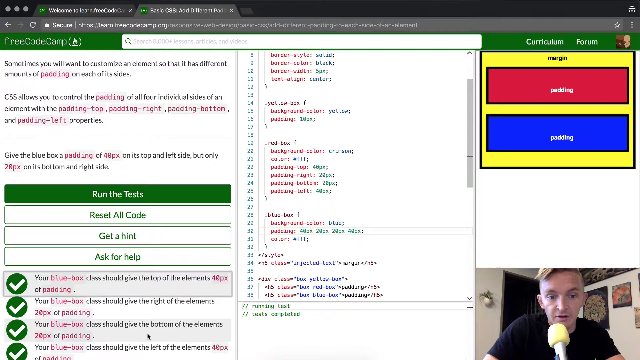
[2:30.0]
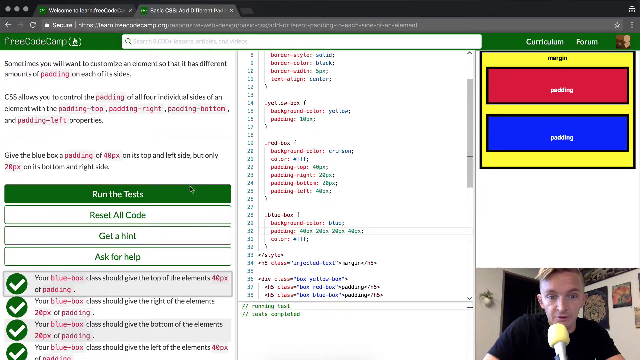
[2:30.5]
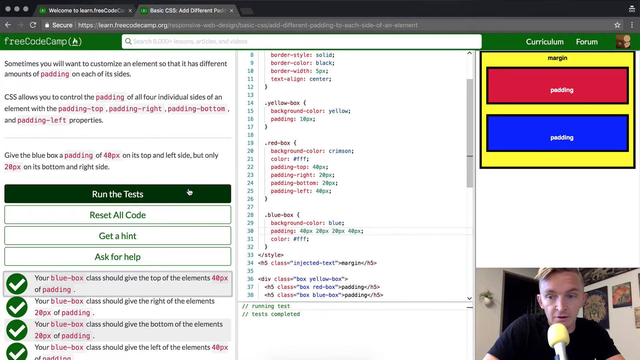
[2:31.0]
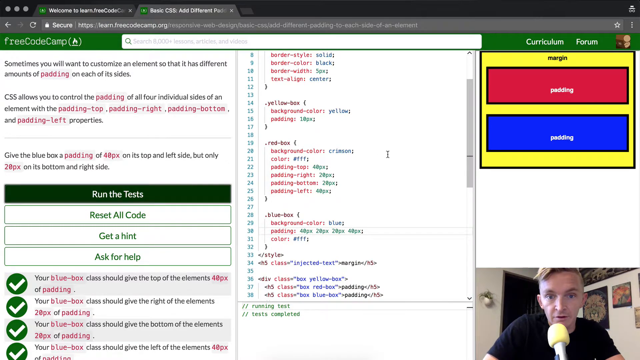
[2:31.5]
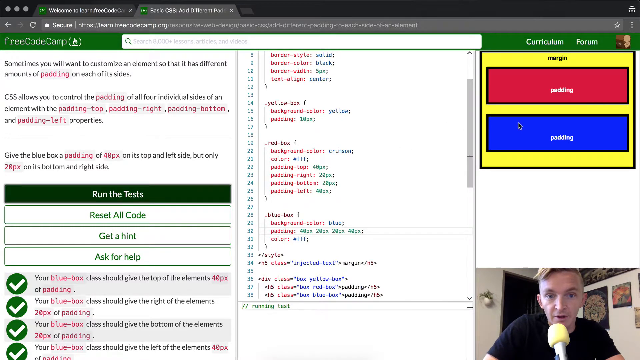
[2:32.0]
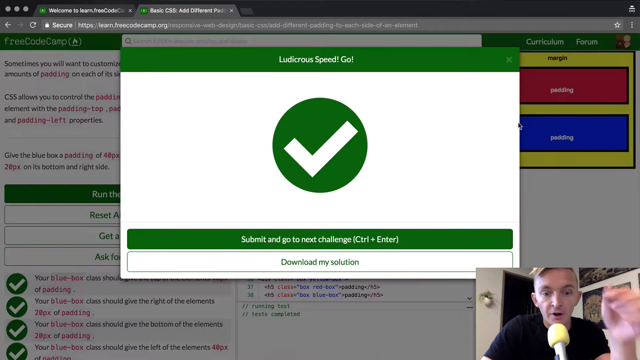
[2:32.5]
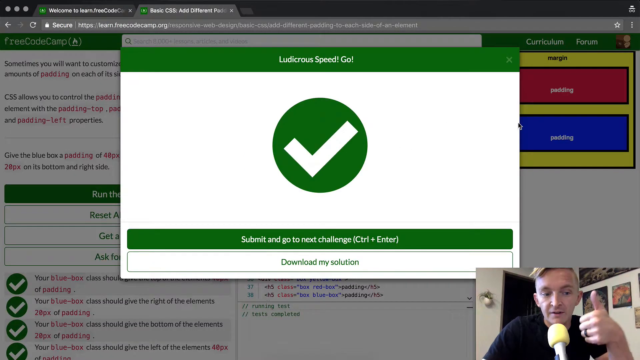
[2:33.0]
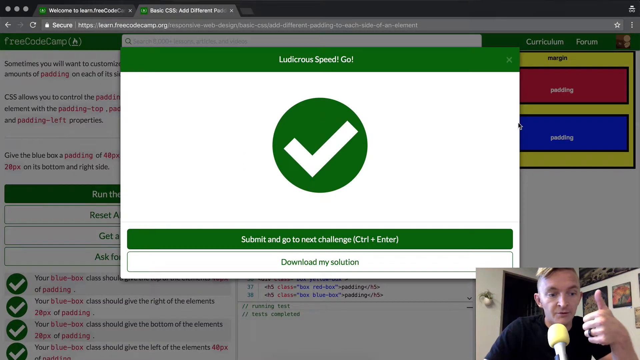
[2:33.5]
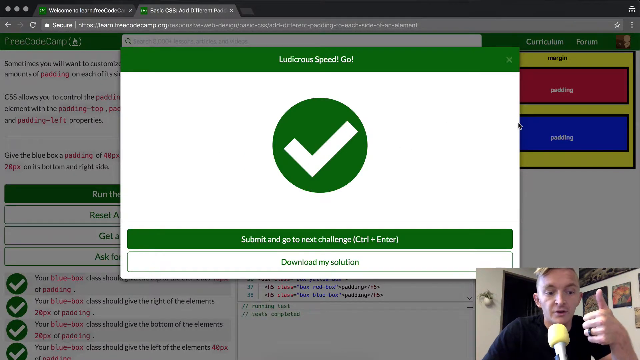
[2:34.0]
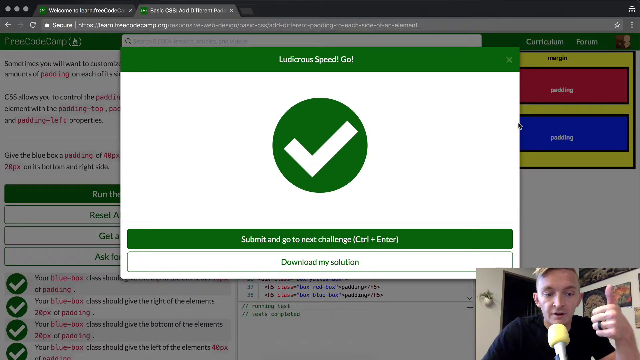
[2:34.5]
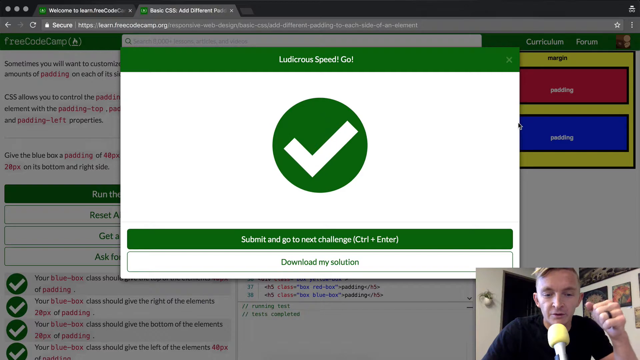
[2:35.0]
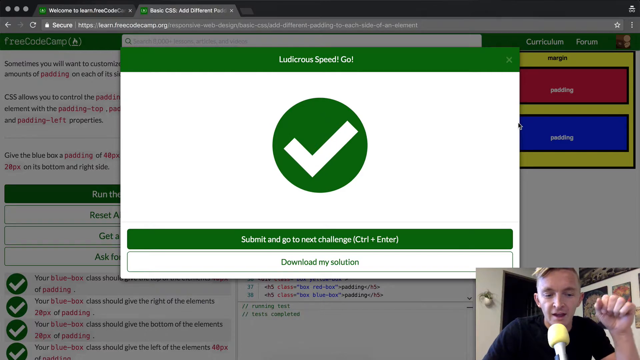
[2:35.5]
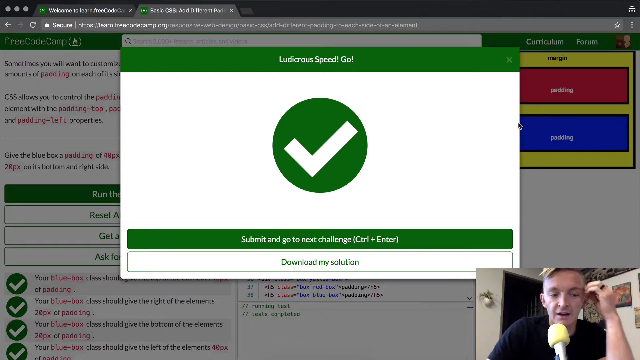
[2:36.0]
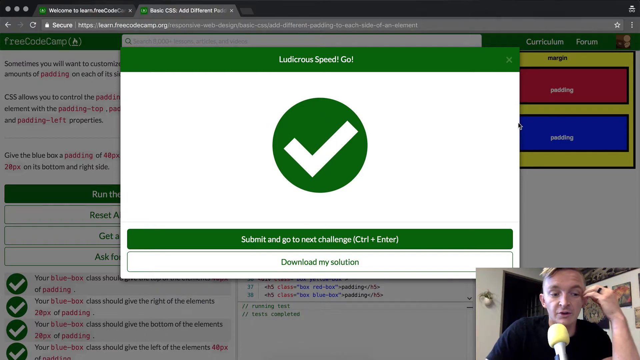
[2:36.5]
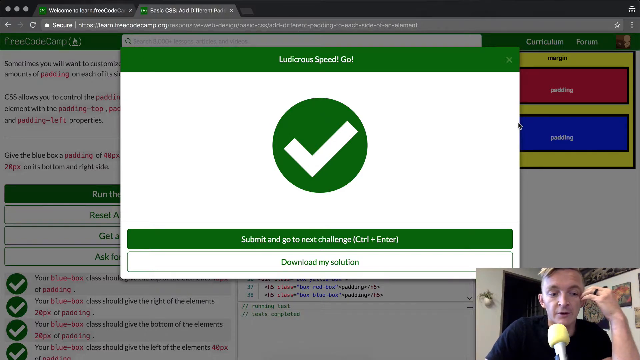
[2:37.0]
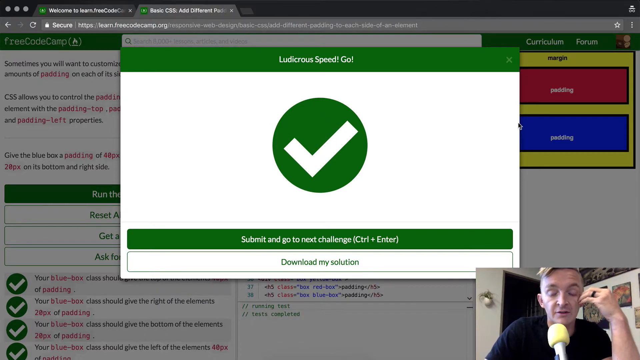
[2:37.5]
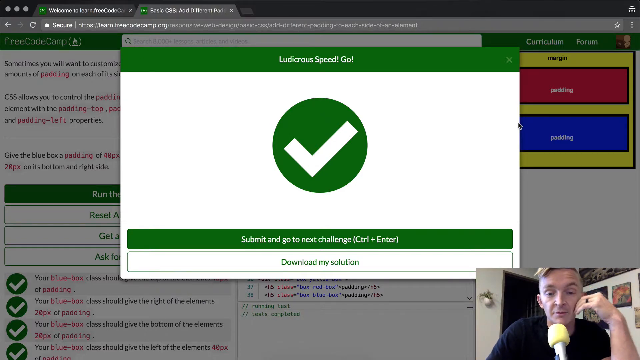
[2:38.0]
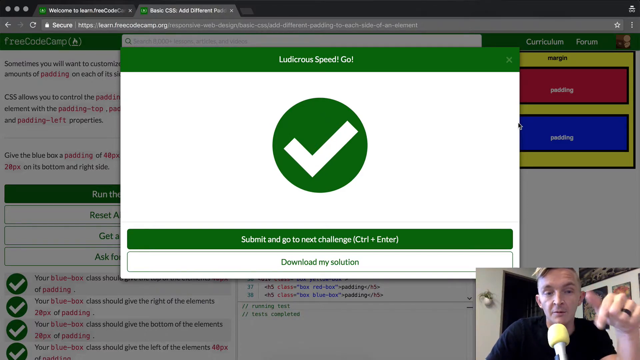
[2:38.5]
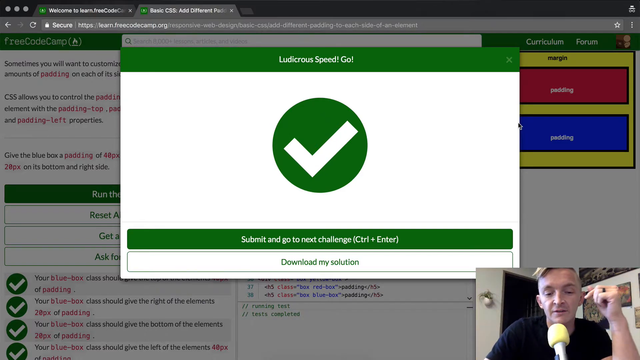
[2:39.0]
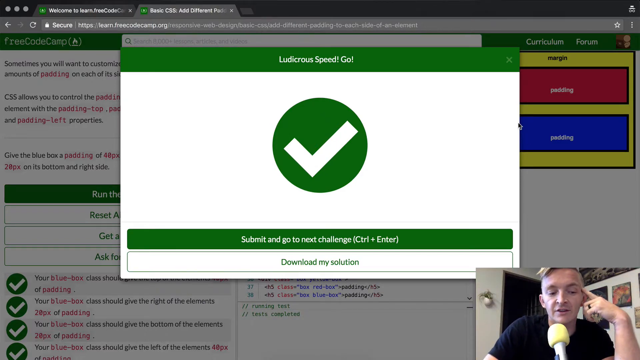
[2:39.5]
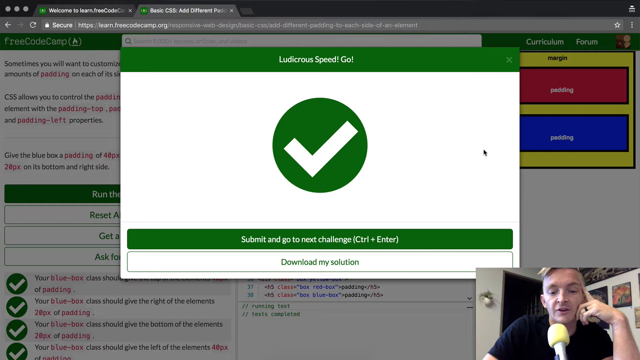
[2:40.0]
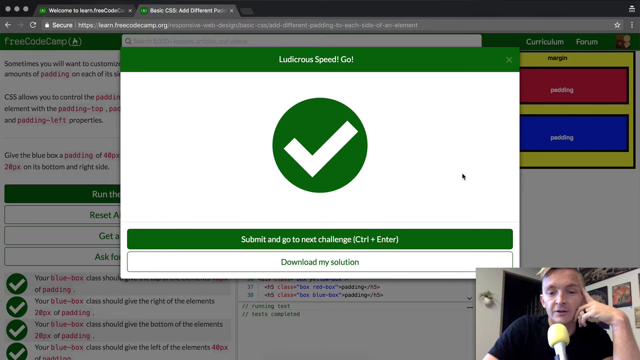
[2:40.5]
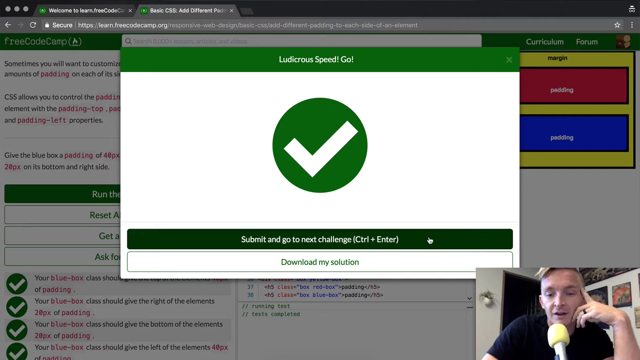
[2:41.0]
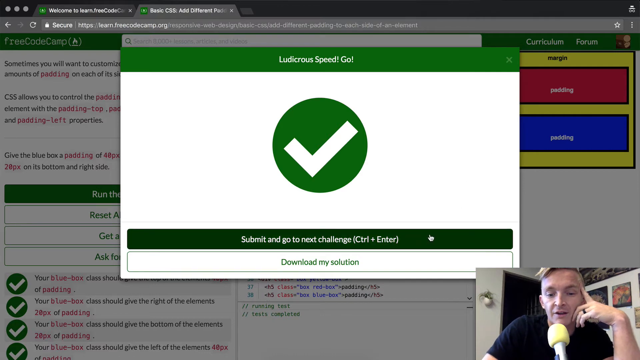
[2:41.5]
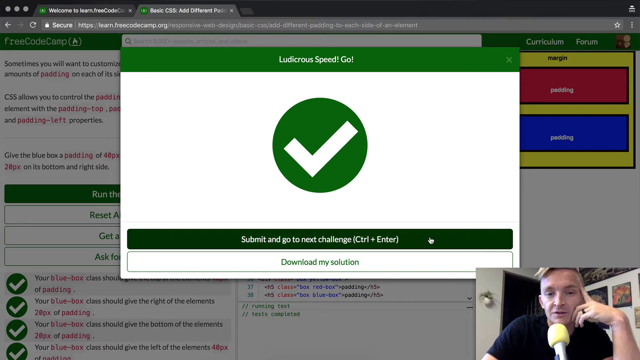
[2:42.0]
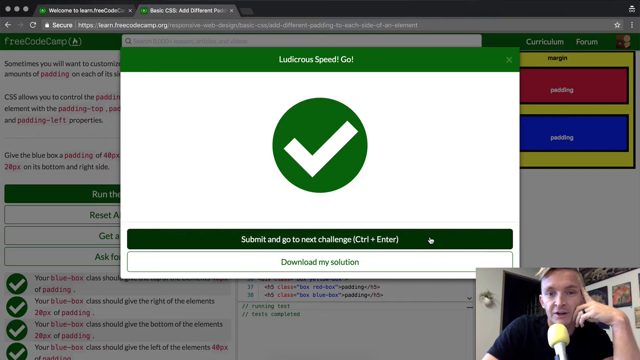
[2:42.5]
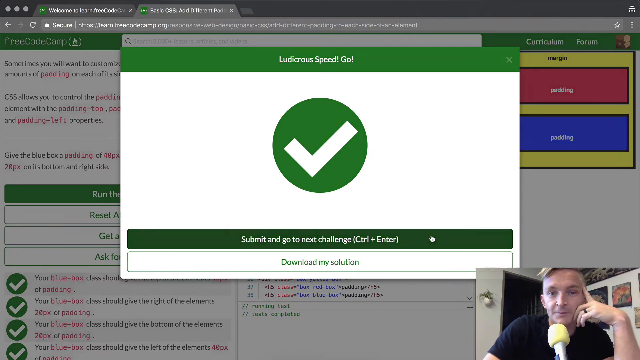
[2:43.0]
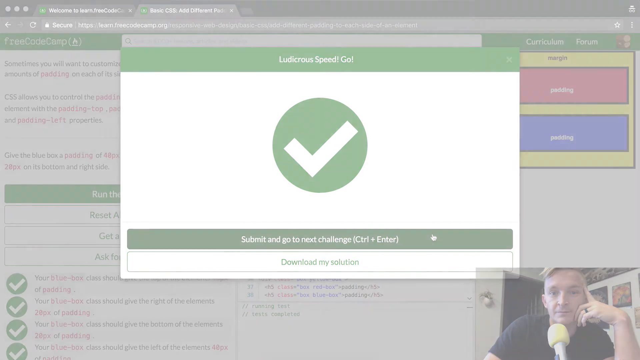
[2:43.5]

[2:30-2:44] The instructor clicks the run test button and the success page pops up. He leans back a tiny bit and raises his hand with his thumb up, excited. His thumb comes down but he keeps his fist up, and his hand goes toward his head, probably in a more relaxed pose; his hand is slightly curved by his cheek and he rests his head on it. At one point he puts out his pointer finger and moves it a little toward the viewer, then rests his hand back on his head, his finger up toward his forehead and the rest of his hand by his cheek. His cursor is still on the success page; he moves it down to the submit button and clicks it.